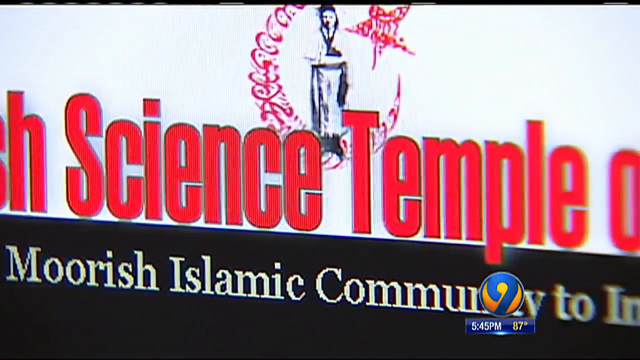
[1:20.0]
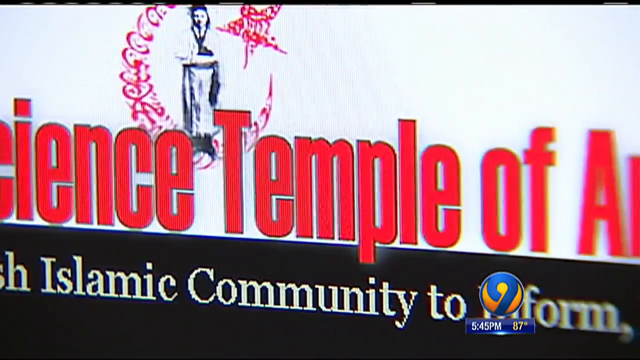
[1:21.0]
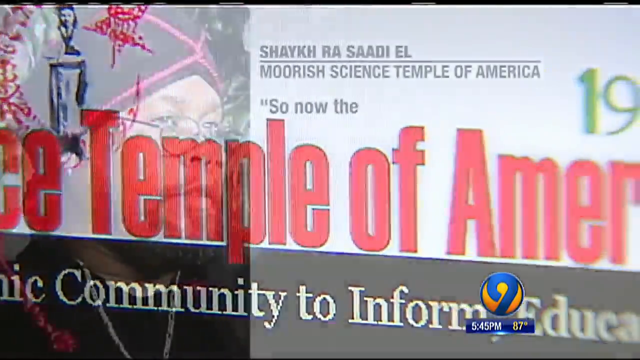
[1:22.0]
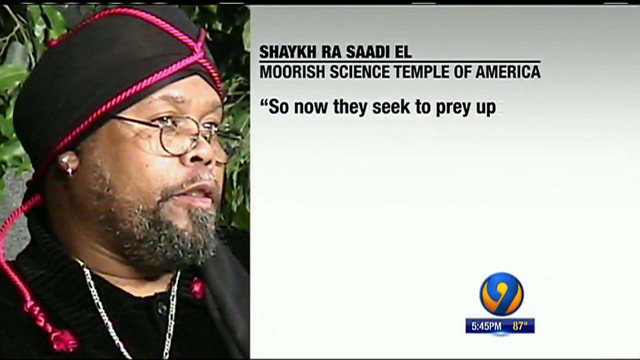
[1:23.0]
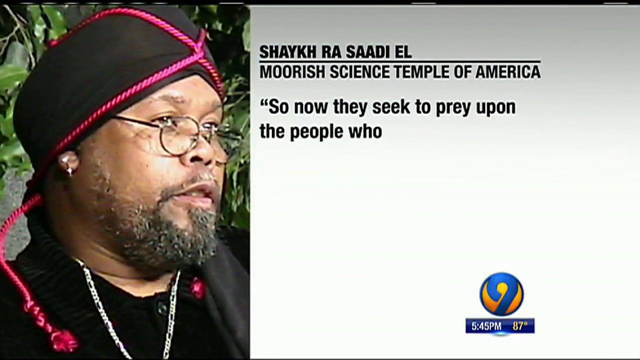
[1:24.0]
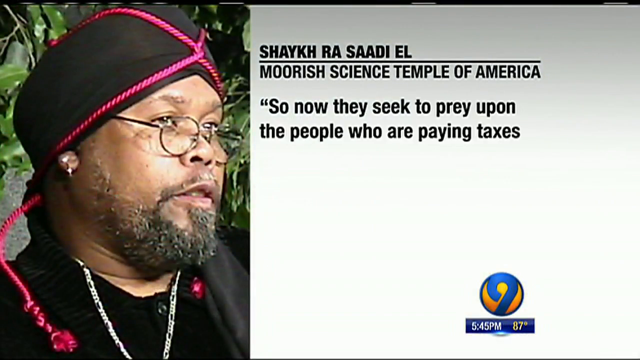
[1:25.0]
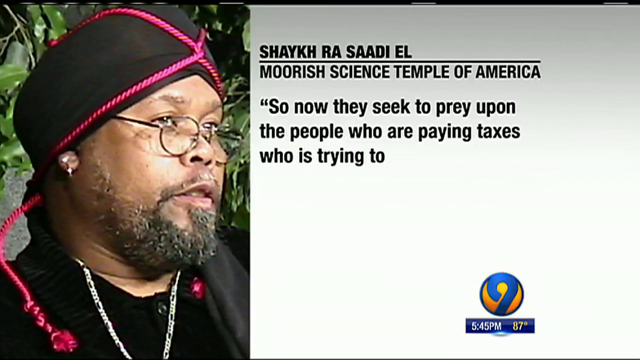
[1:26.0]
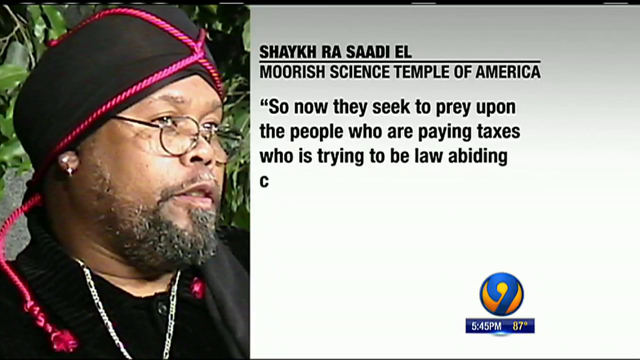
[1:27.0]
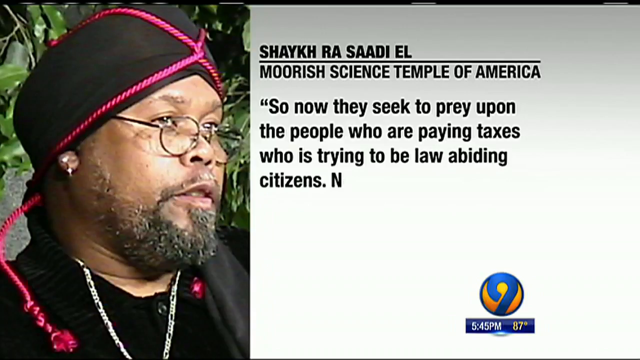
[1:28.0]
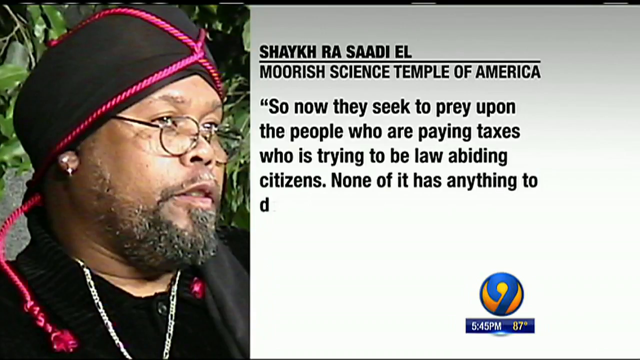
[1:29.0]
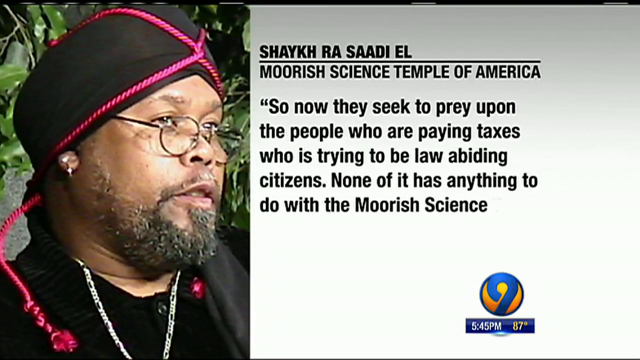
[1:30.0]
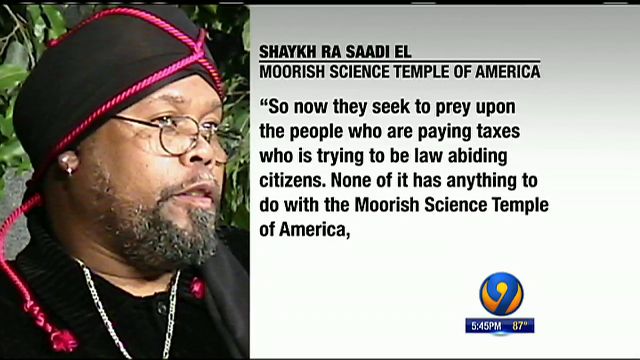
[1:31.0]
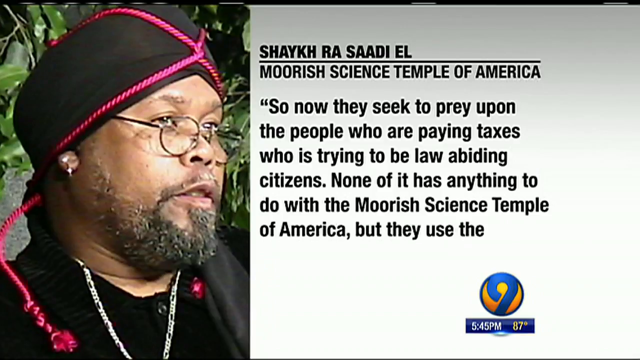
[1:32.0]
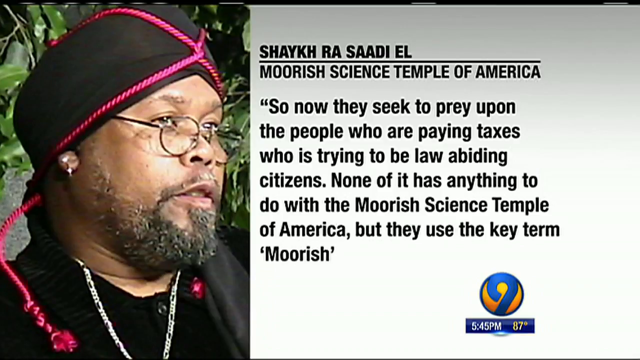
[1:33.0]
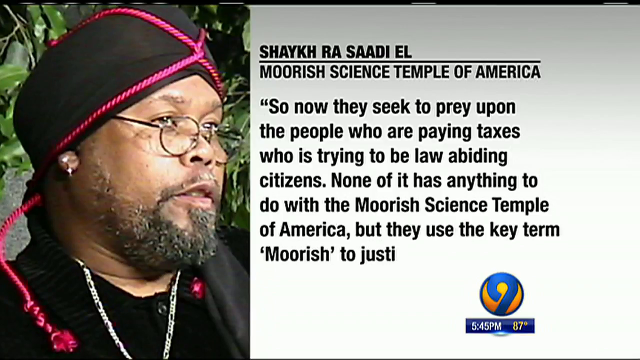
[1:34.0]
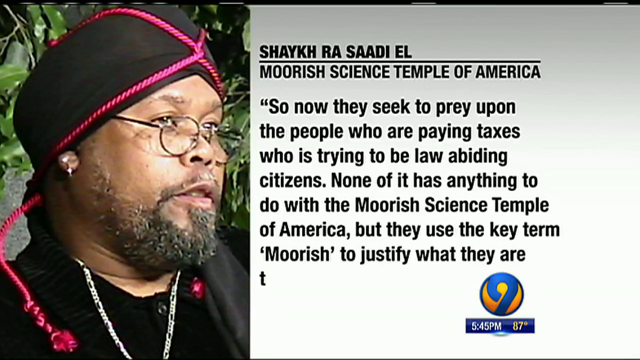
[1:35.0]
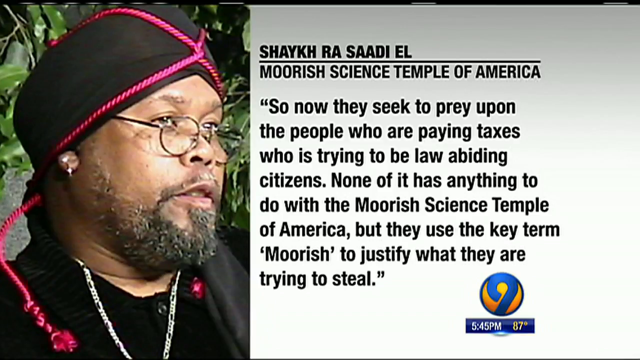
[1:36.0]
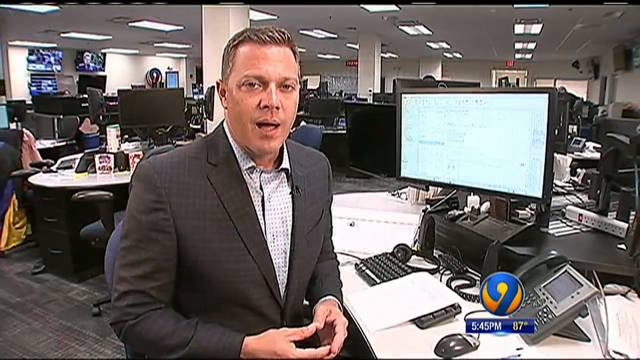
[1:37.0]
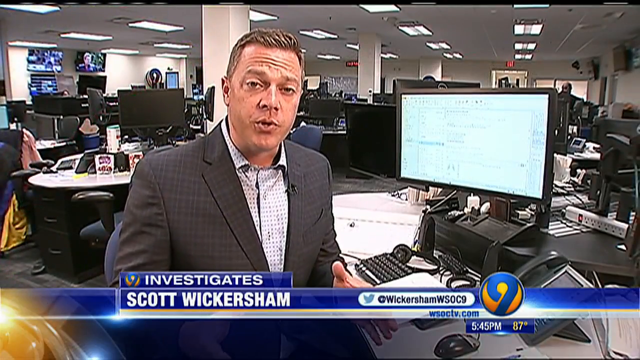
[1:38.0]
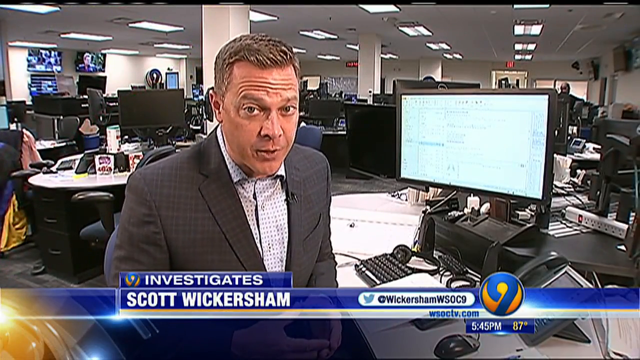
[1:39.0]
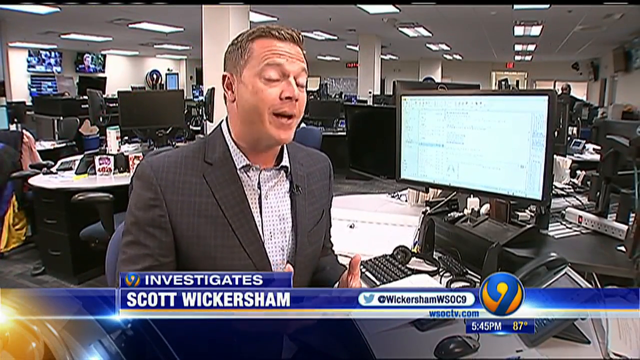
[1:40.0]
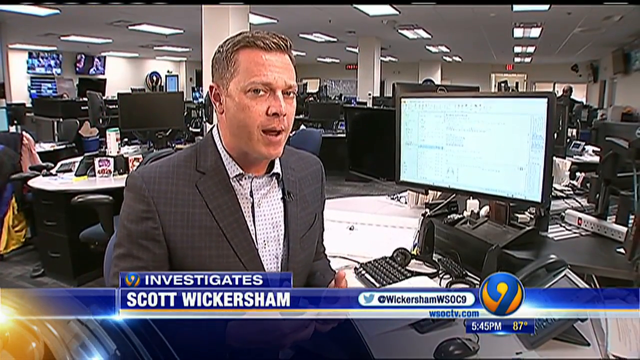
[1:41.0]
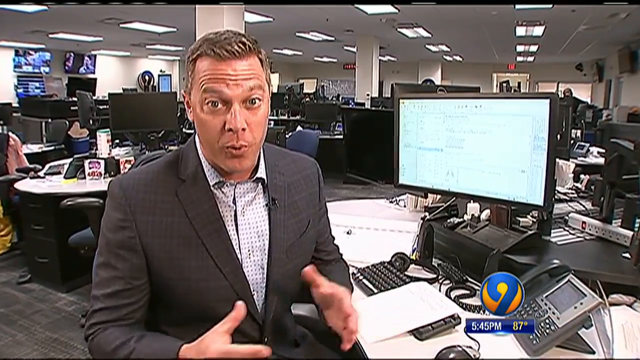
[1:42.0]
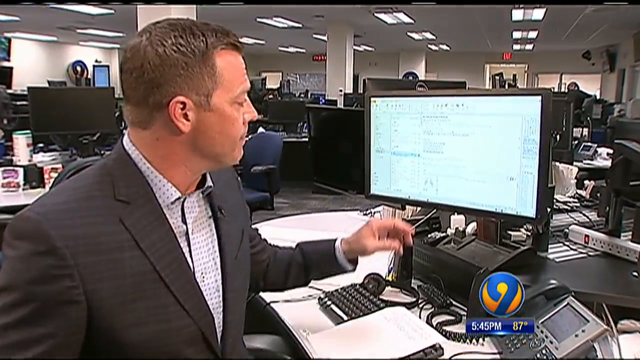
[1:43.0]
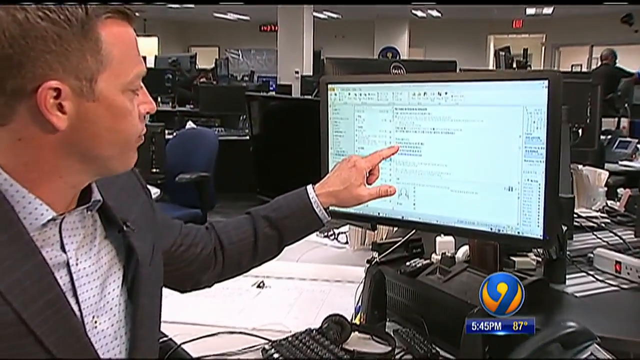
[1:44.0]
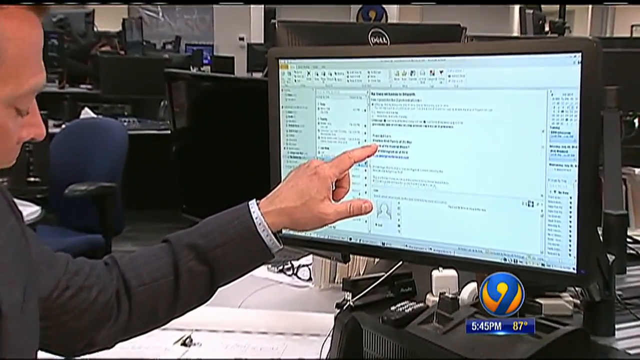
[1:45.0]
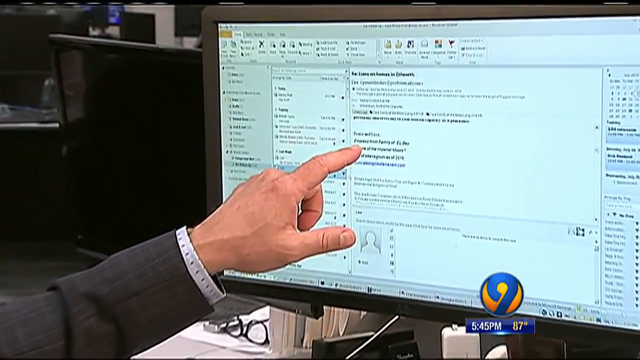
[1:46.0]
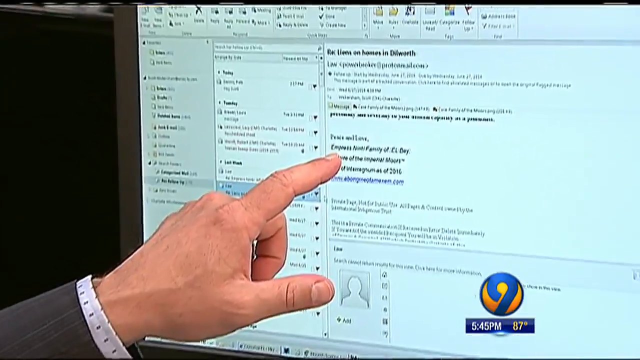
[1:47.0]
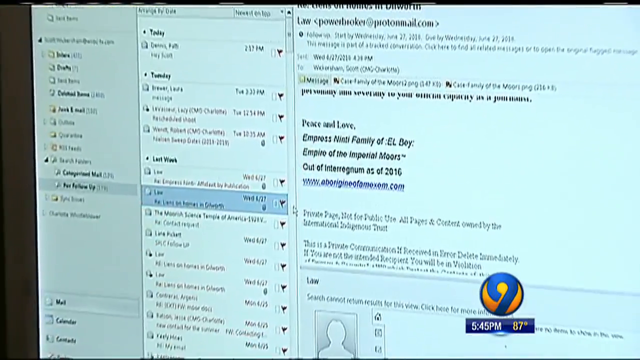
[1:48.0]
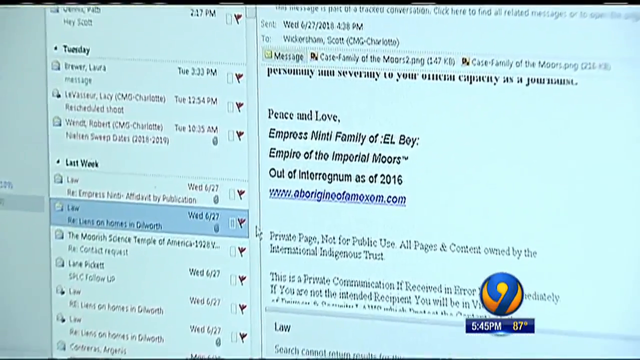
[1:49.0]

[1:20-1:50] The website is shown, and then a Black man wearing a hat with ropes on it appears. Text reads "Shaikh Ra Sa Di El, Moorish Science Temple of America," along with a quote: "so now they seek to prey upon the people who are paying taxes, who is trying to be law-abiding citizens."